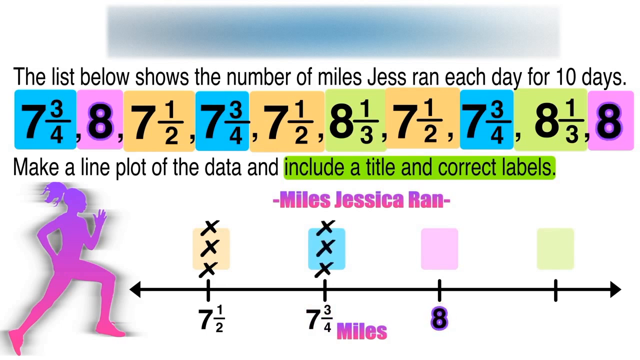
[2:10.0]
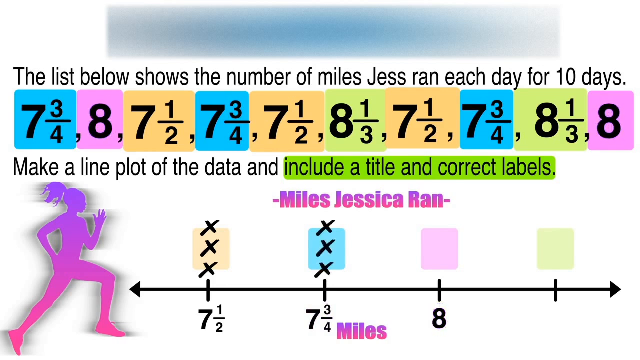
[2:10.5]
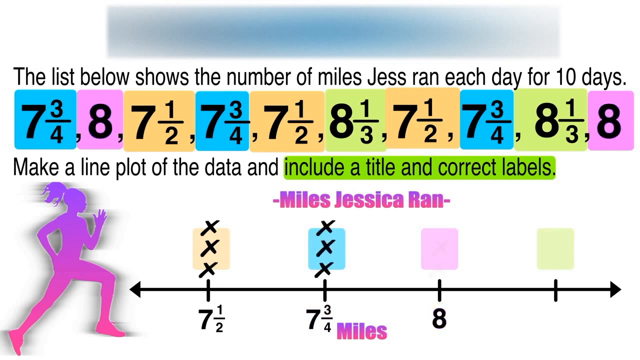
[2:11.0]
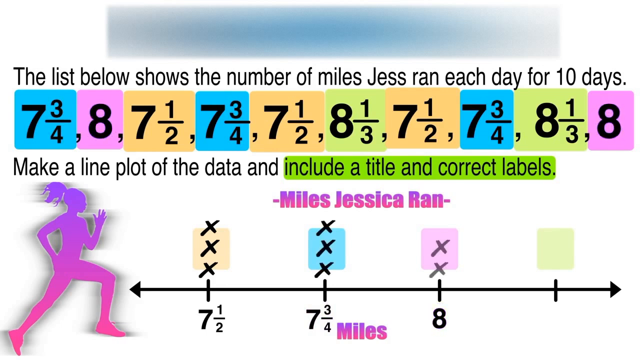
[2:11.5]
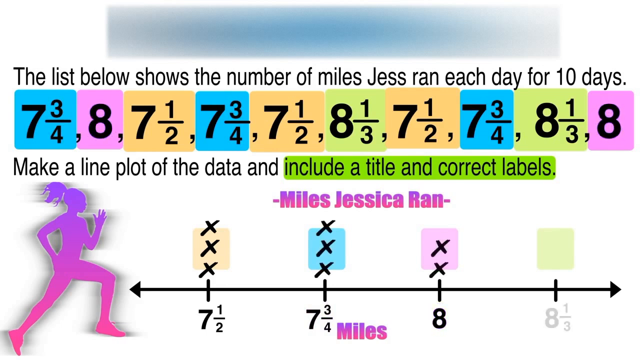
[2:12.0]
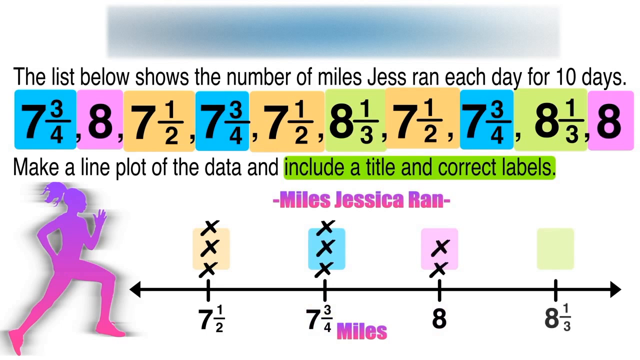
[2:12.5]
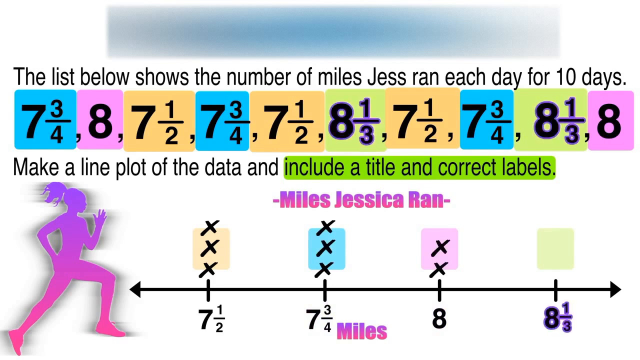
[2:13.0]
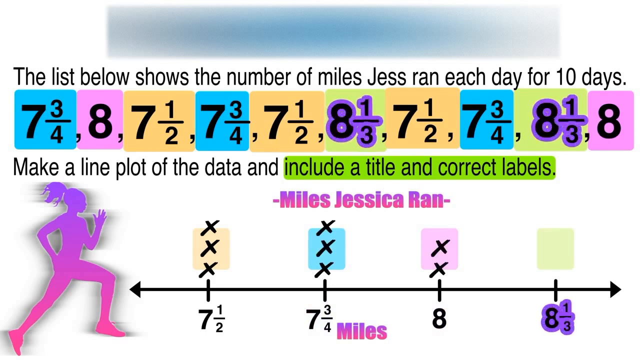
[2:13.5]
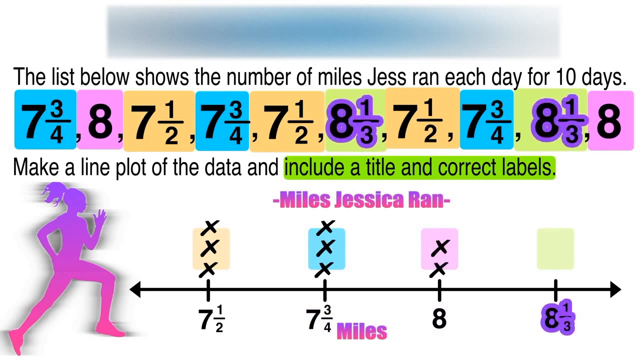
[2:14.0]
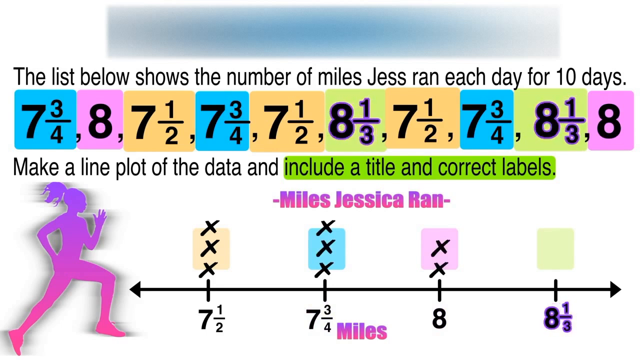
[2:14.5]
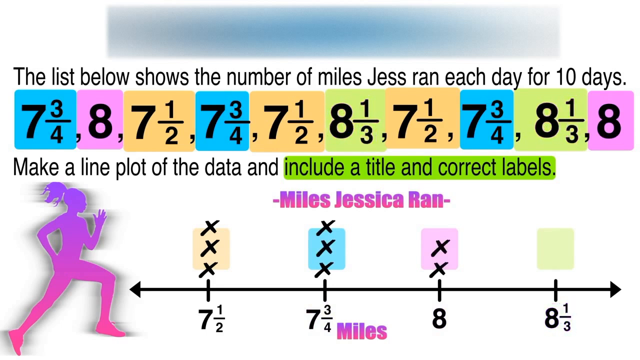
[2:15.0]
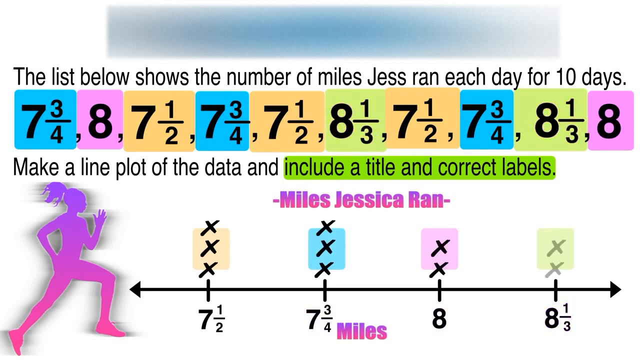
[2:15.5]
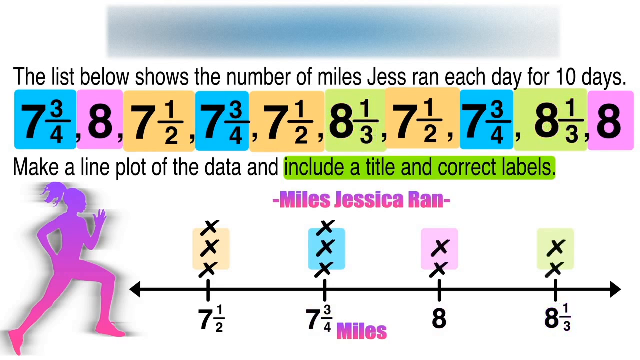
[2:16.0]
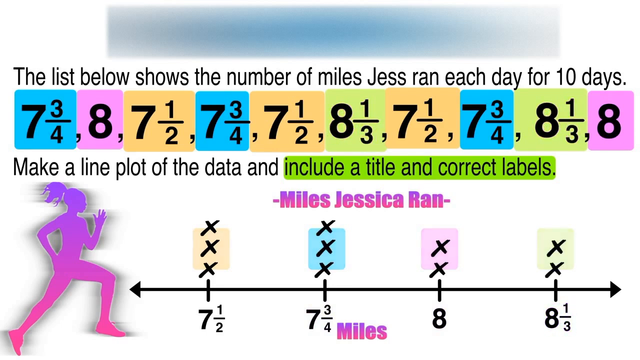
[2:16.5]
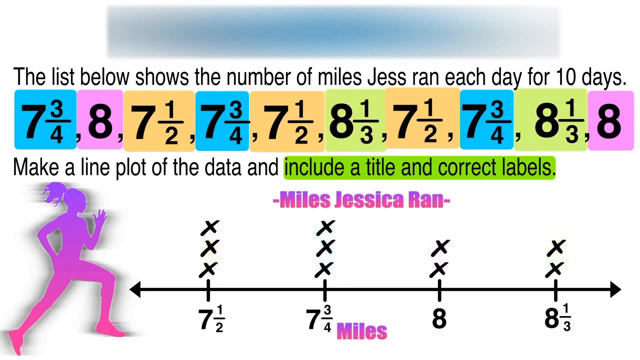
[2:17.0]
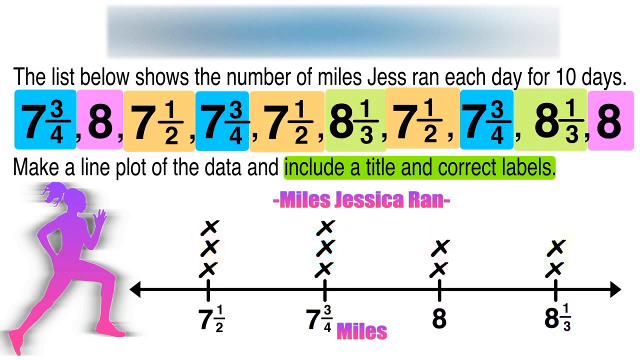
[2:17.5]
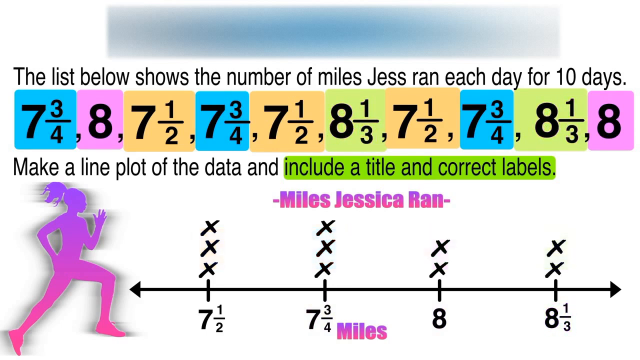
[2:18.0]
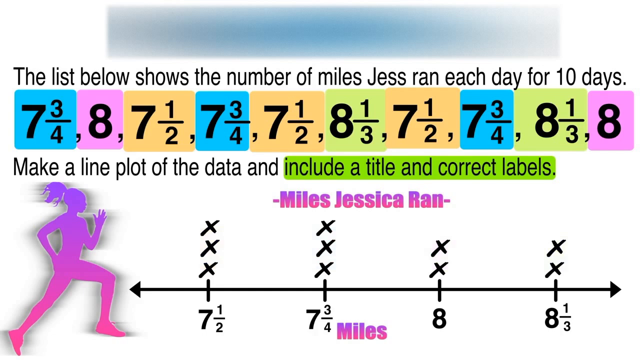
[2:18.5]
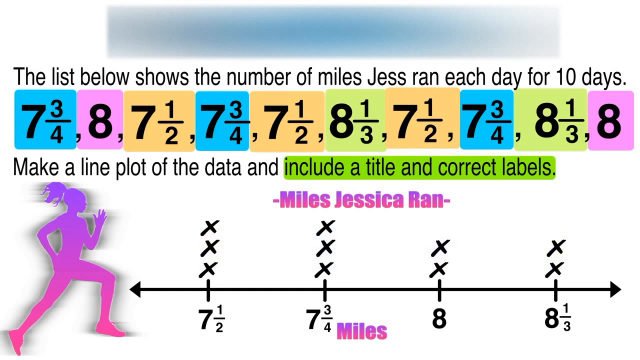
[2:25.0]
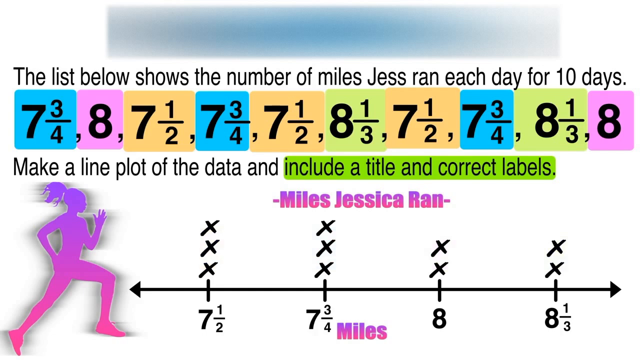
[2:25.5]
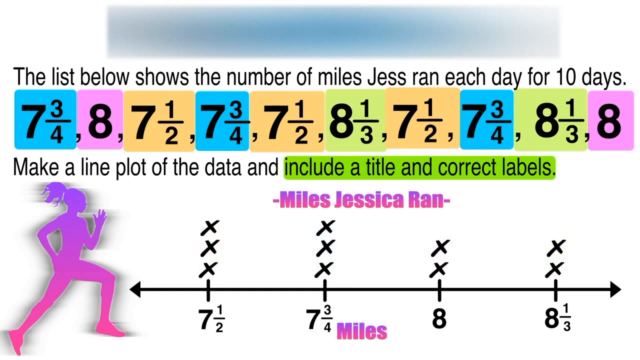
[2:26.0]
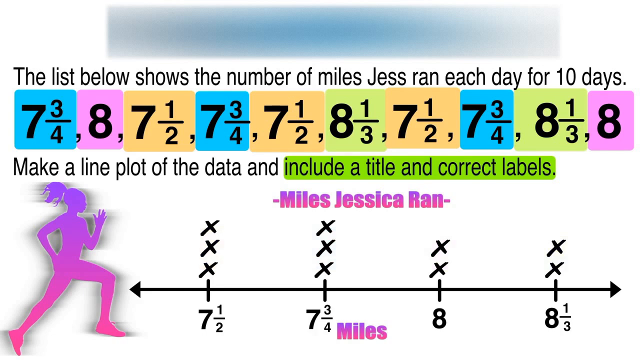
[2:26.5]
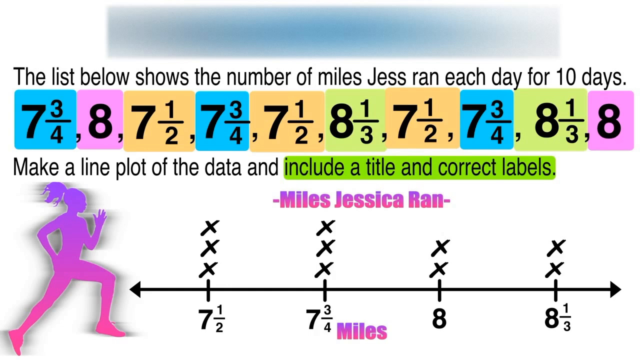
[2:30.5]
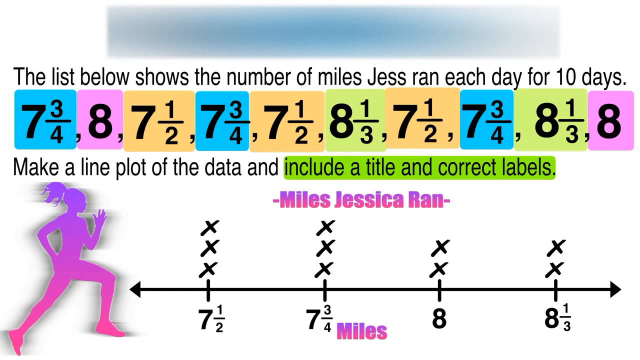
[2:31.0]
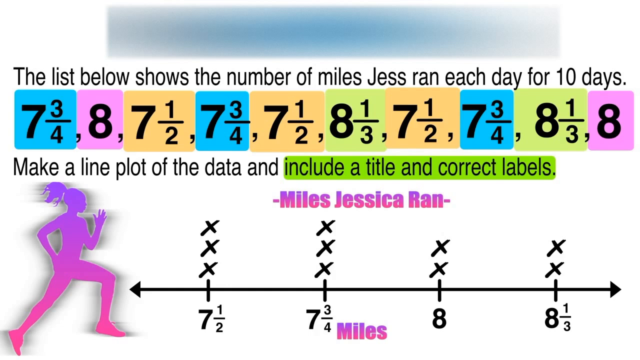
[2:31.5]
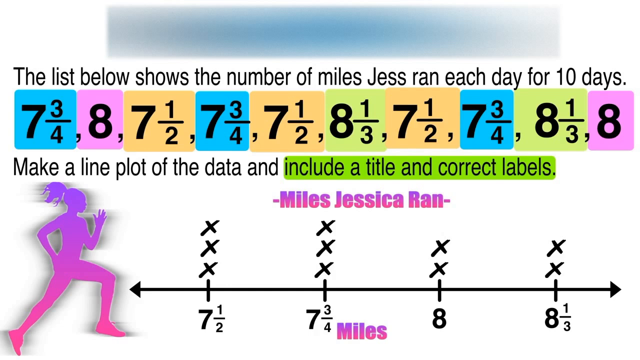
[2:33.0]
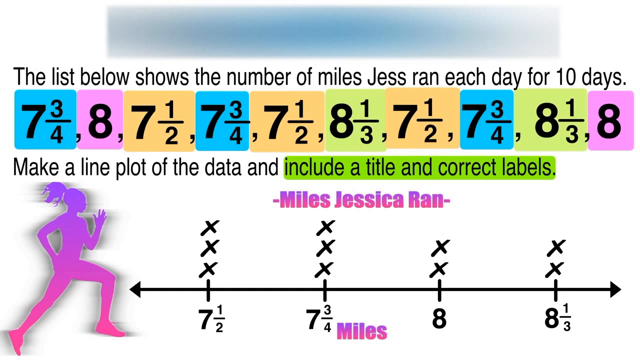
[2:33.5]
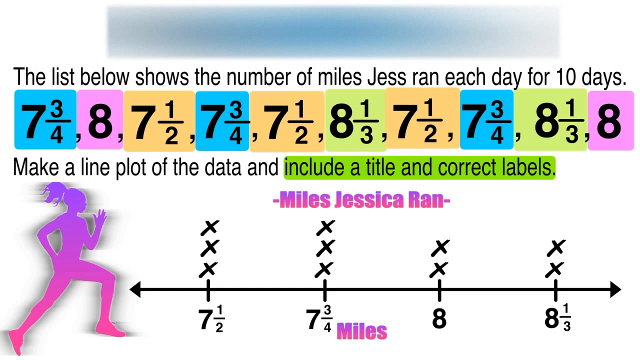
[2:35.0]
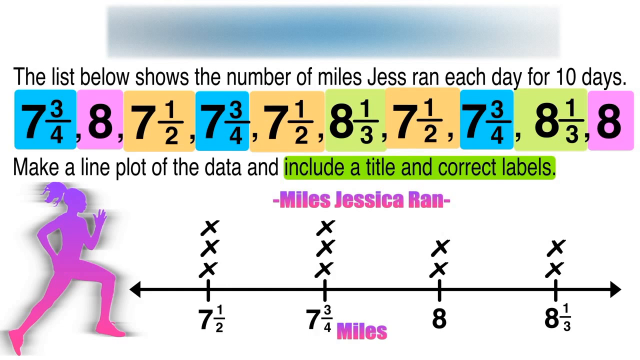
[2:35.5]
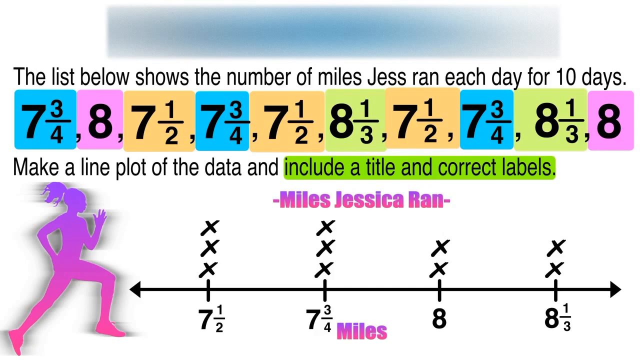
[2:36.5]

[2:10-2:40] The number 8 is highlighted, and two Xs appear on the purple box on the number line. The last number is 8 1/3, and two Xs appear above or on the green box. The number line is now complete, and the color codes on it disappear, leaving only the Xs: three Xs for 7 1/2, three for 7 3/4, two for 8, and two for 8 1/3. The screen stays like this with nothing changing, and no words are removed or added.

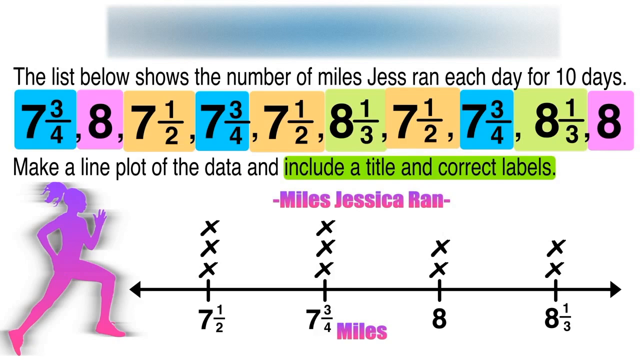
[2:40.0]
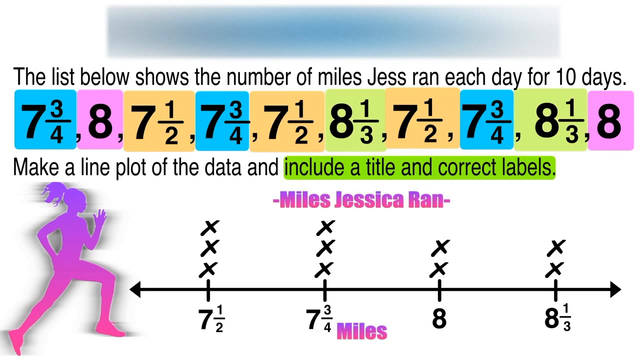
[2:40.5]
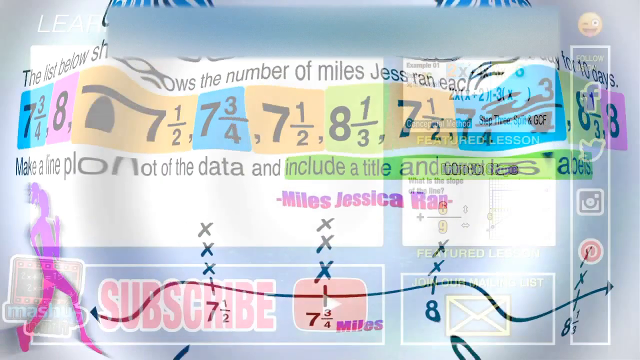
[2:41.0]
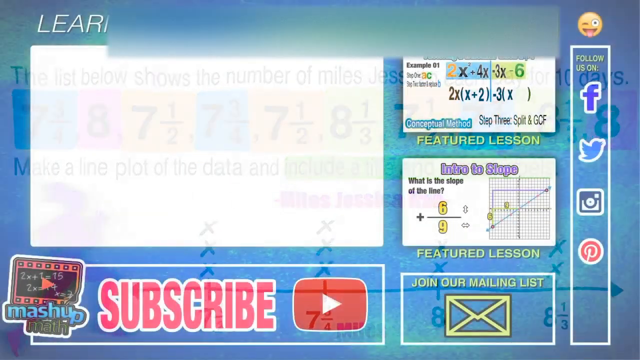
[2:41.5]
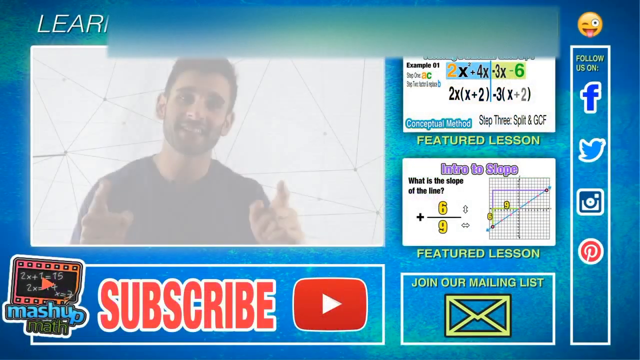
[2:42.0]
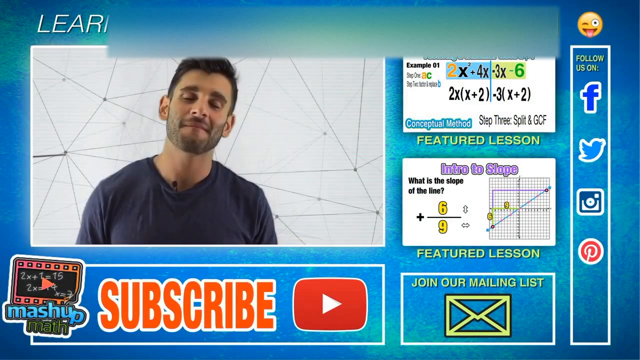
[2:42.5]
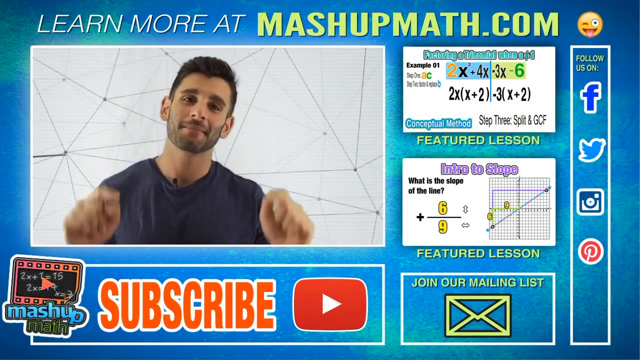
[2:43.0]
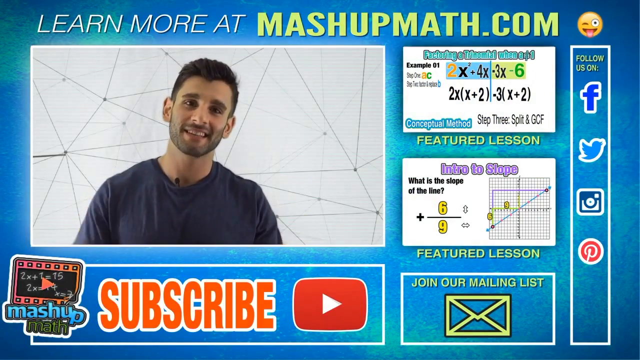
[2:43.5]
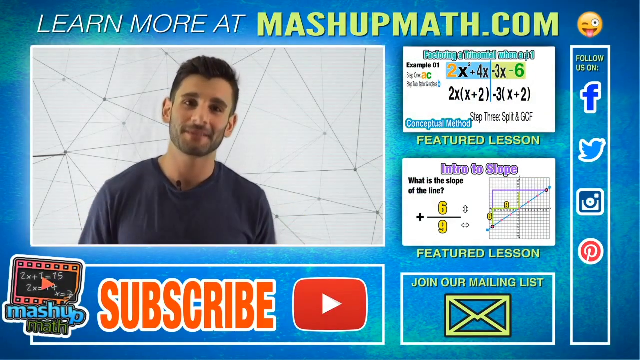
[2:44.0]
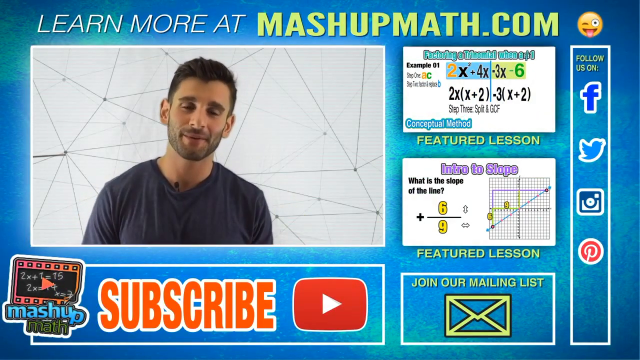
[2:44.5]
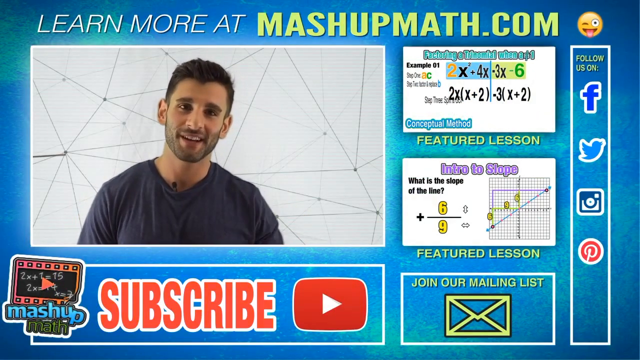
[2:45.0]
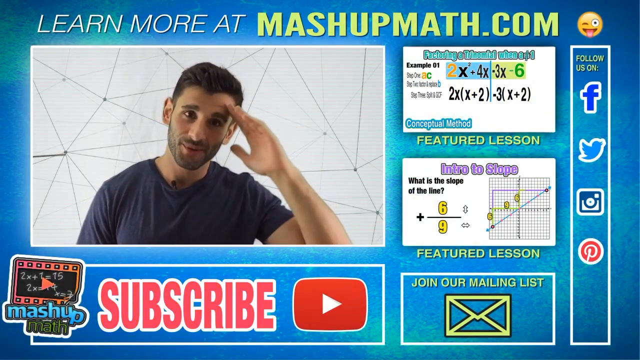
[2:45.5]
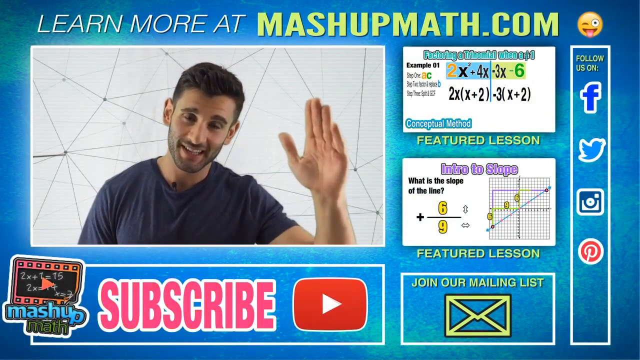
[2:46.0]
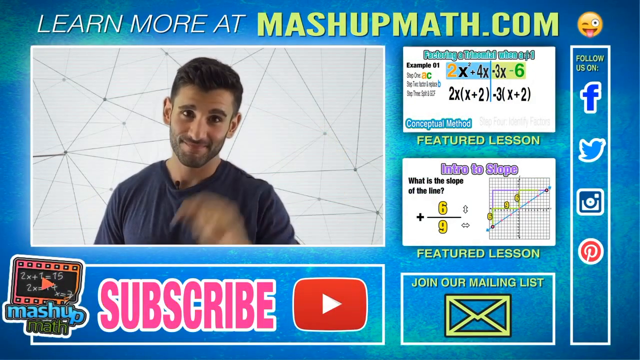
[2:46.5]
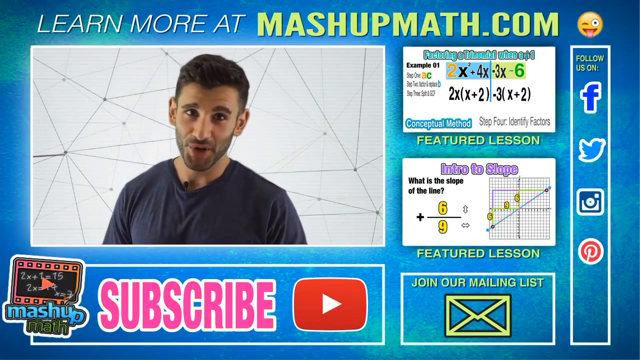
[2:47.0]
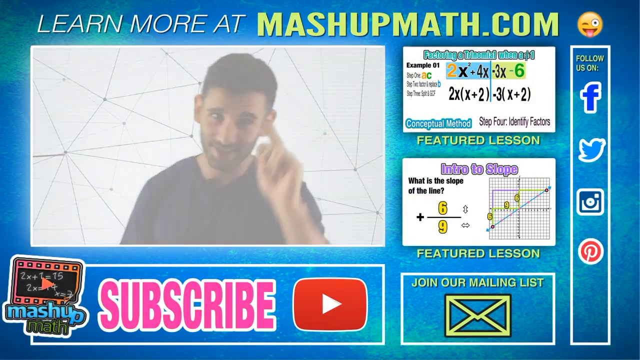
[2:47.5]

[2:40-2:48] A wave-like transition cuts to the end of the tutorial, a YouTube page with a blue background. There is a small video of the tutor, a male instructor. A line of text reads "learn more at mashupmath.com," and there is a column of social media icons for Facebook, Twitter, Instagram, and Pinterest. There is also a mailing list indicated by an envelope, a YouTube subscribe button, and two charts.